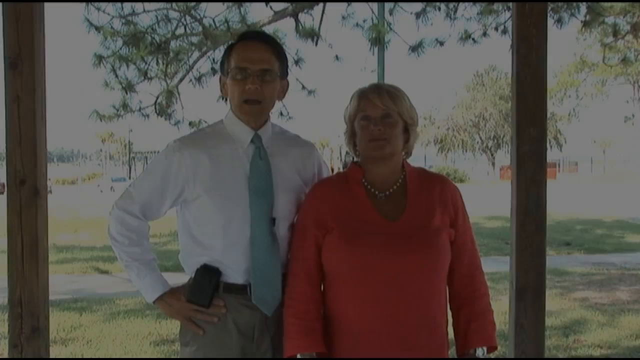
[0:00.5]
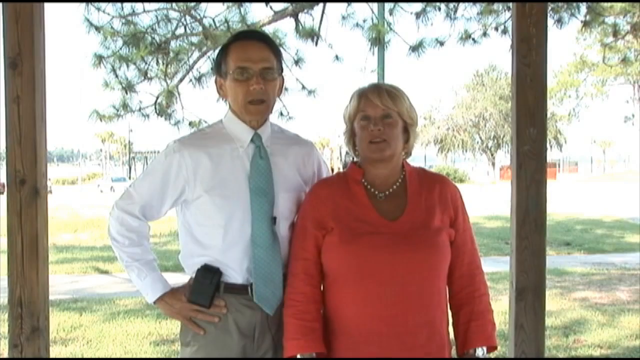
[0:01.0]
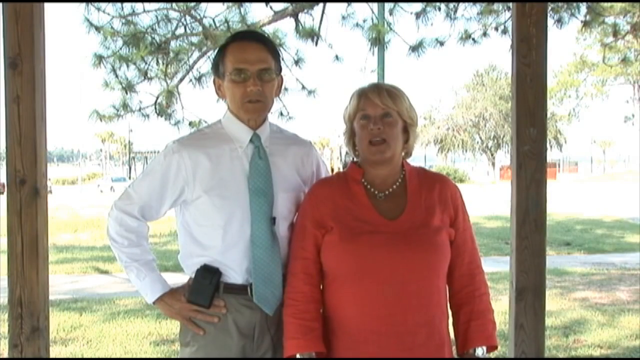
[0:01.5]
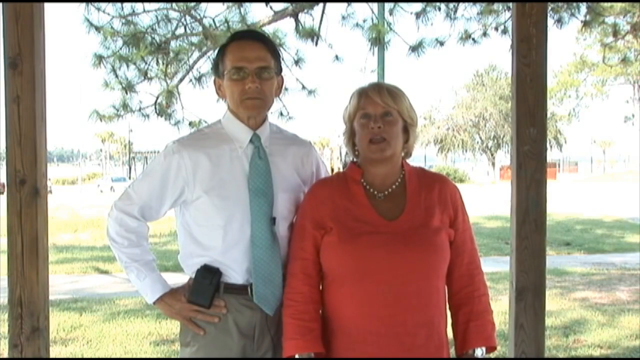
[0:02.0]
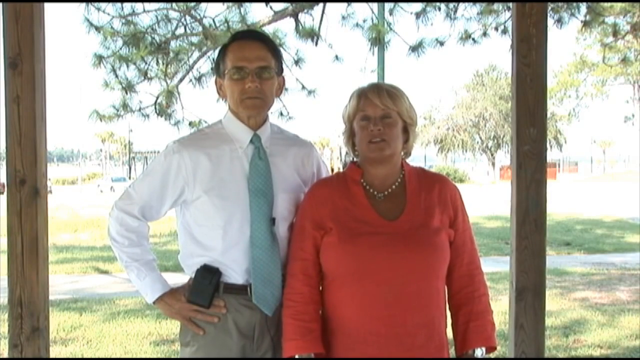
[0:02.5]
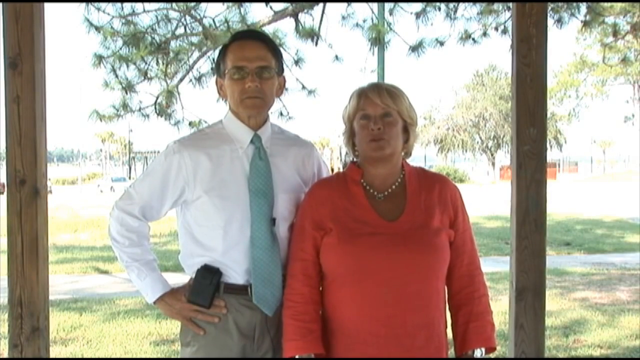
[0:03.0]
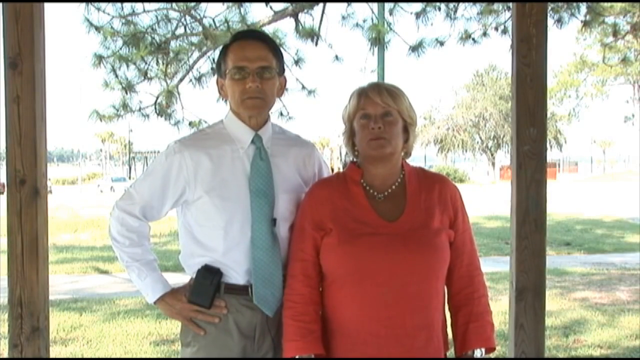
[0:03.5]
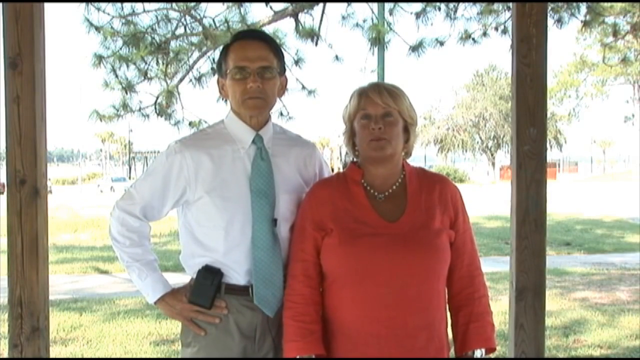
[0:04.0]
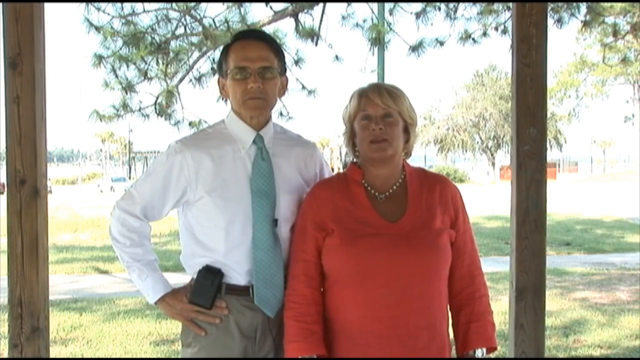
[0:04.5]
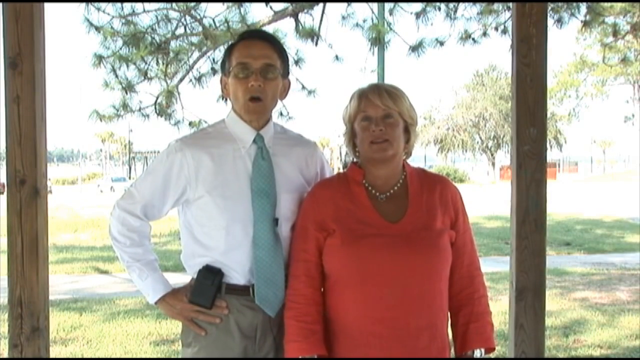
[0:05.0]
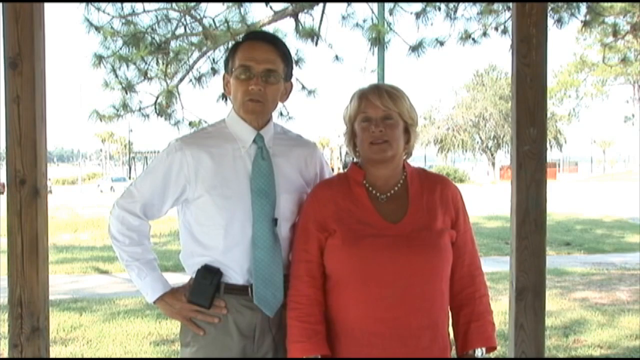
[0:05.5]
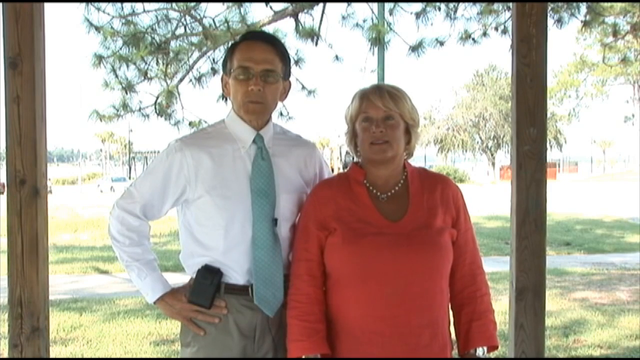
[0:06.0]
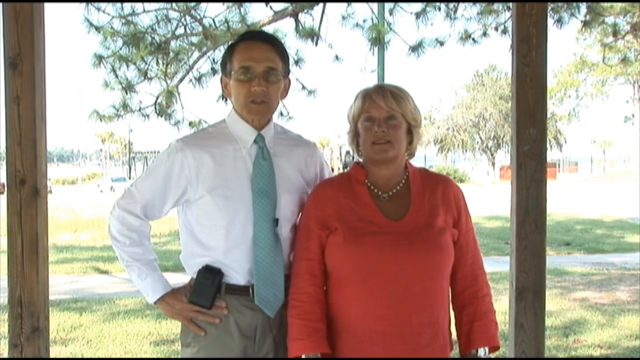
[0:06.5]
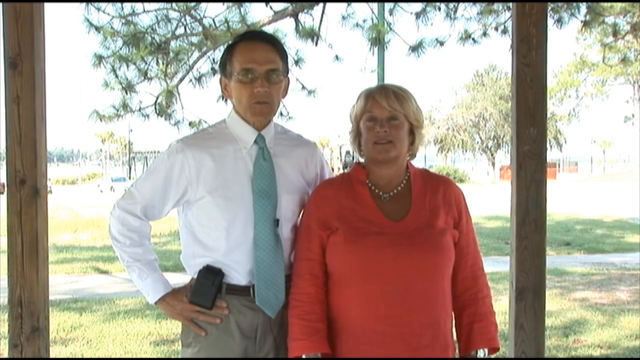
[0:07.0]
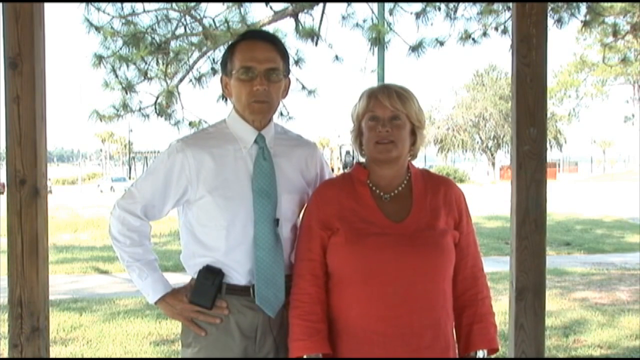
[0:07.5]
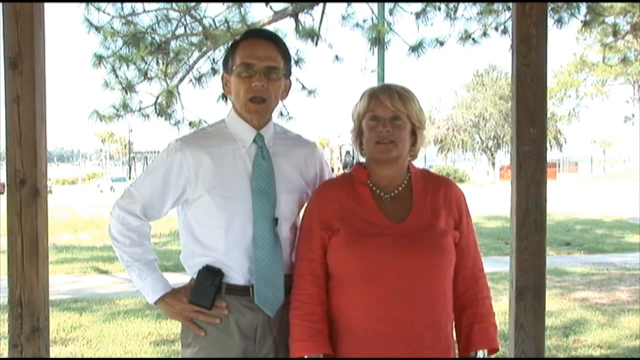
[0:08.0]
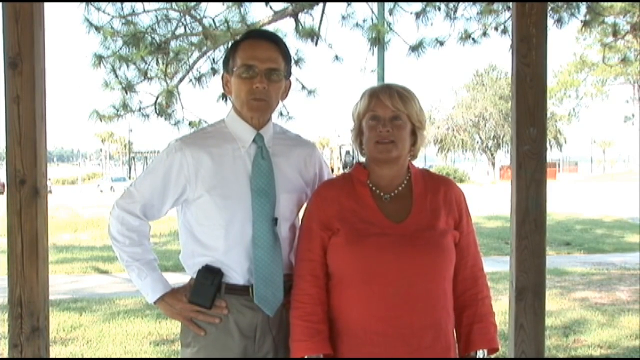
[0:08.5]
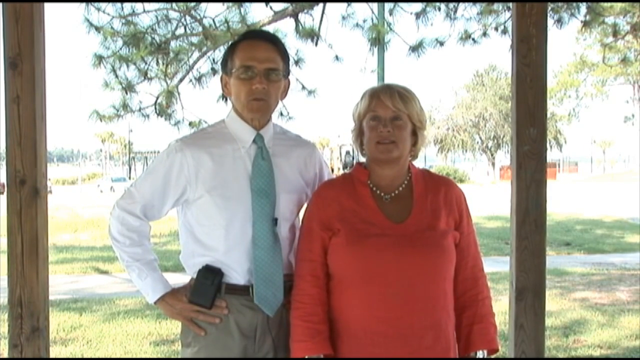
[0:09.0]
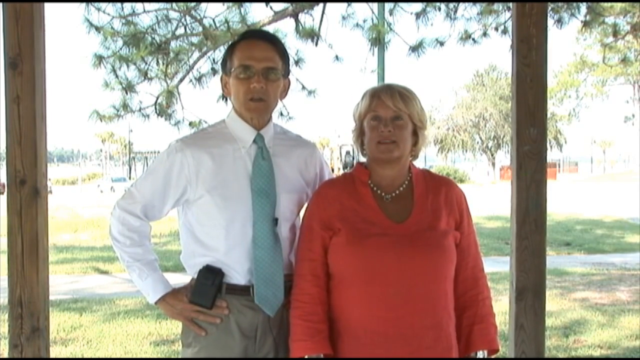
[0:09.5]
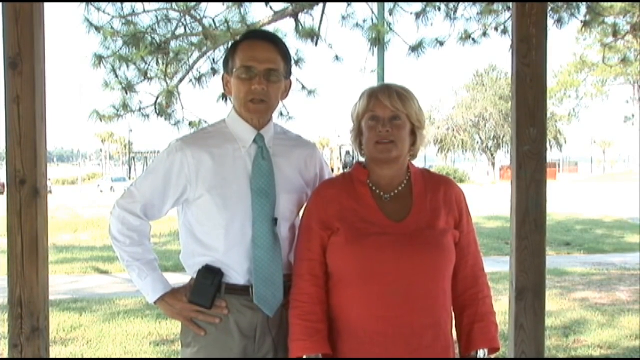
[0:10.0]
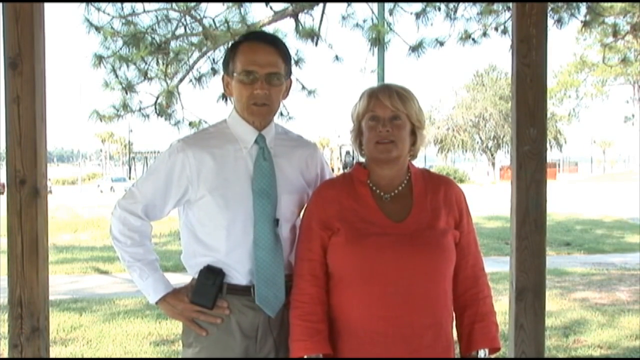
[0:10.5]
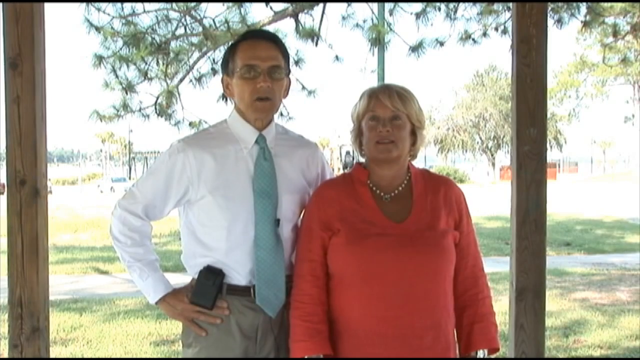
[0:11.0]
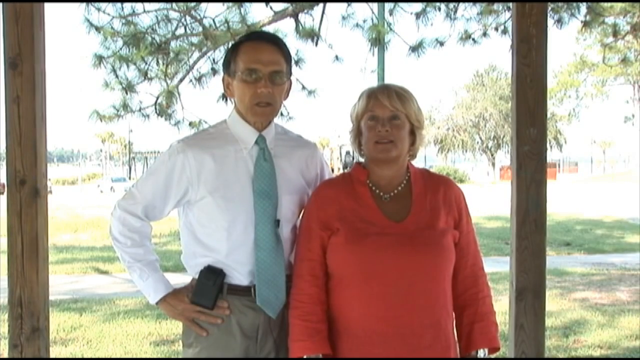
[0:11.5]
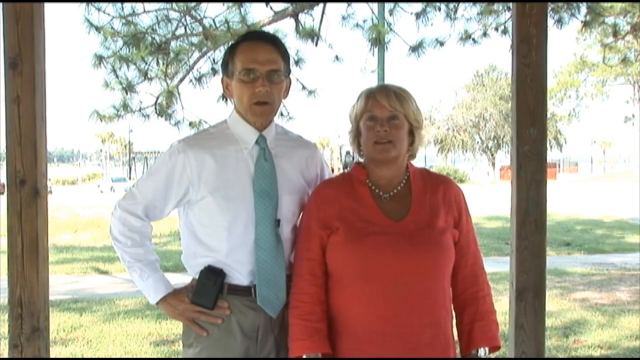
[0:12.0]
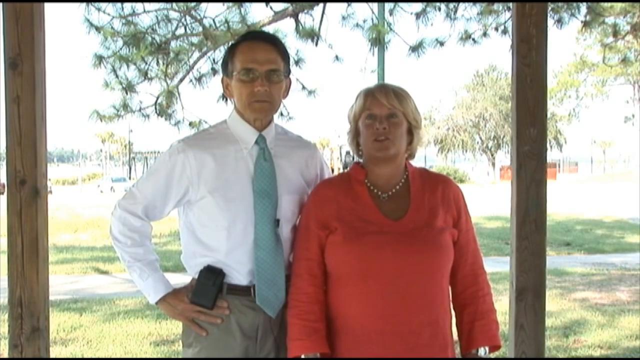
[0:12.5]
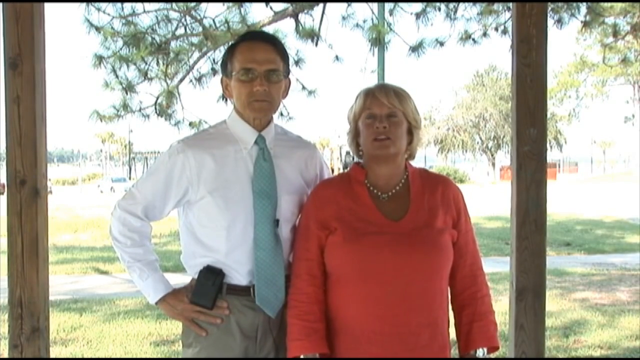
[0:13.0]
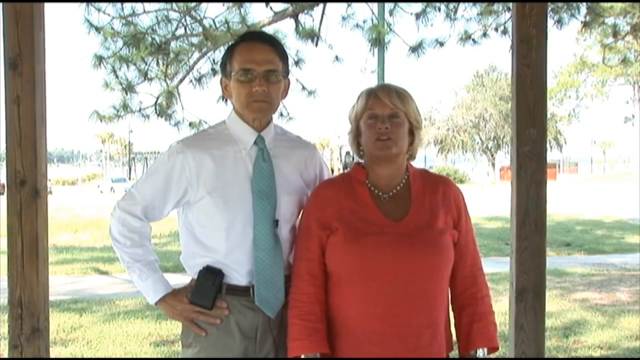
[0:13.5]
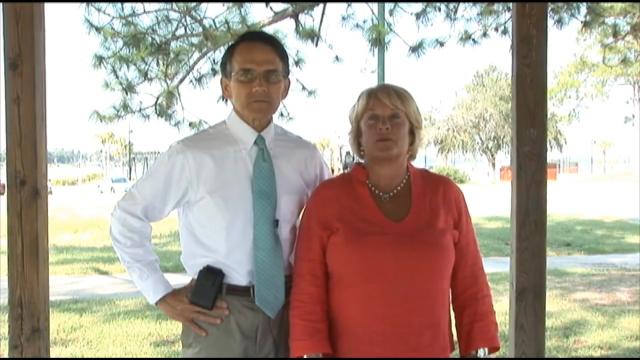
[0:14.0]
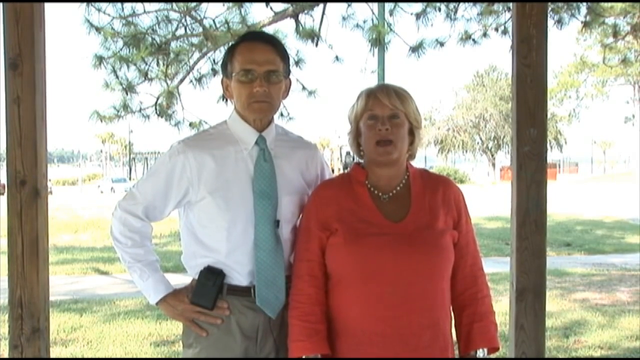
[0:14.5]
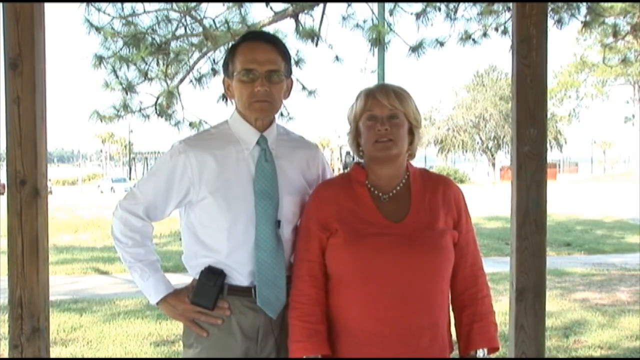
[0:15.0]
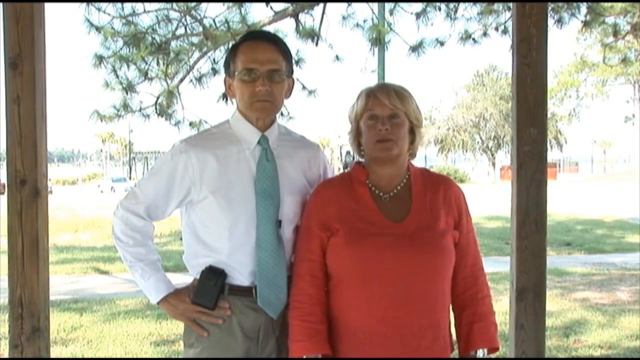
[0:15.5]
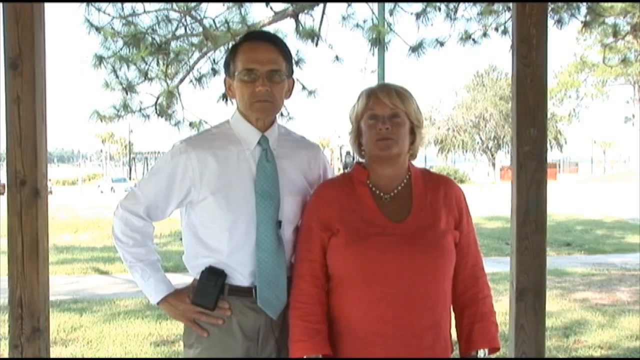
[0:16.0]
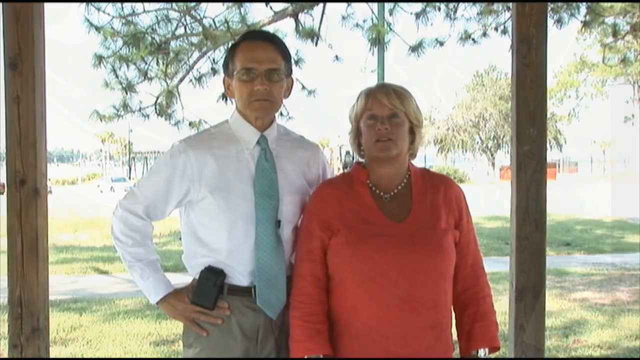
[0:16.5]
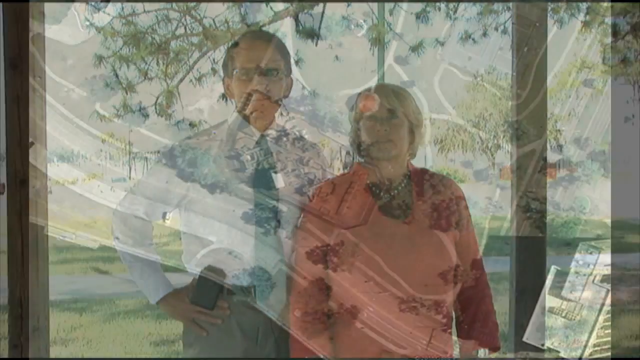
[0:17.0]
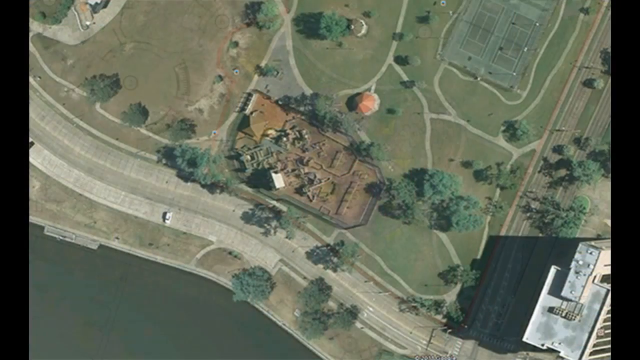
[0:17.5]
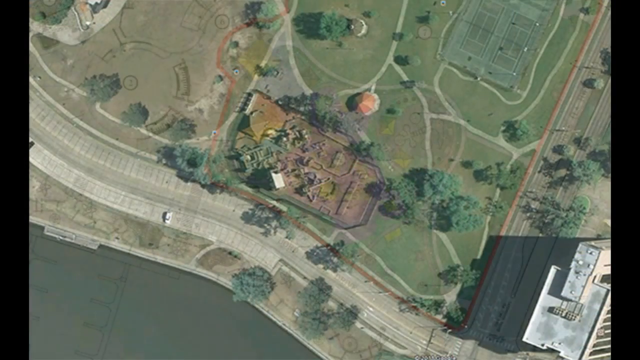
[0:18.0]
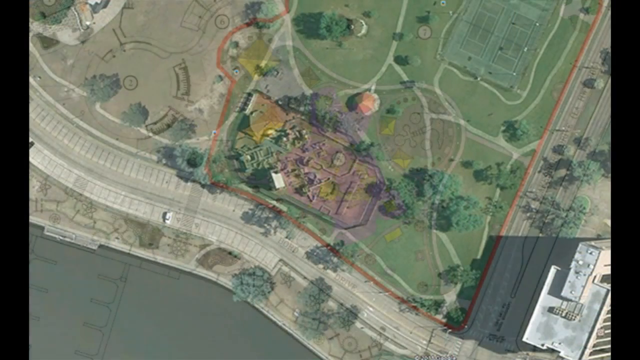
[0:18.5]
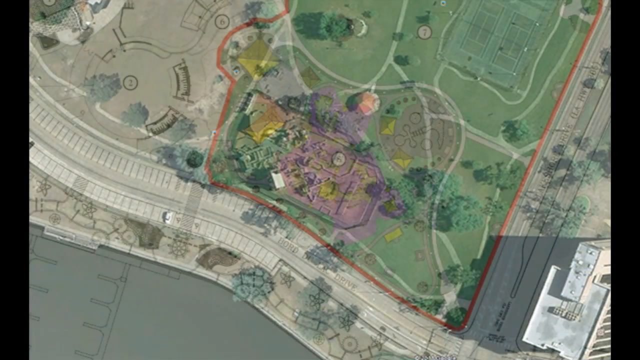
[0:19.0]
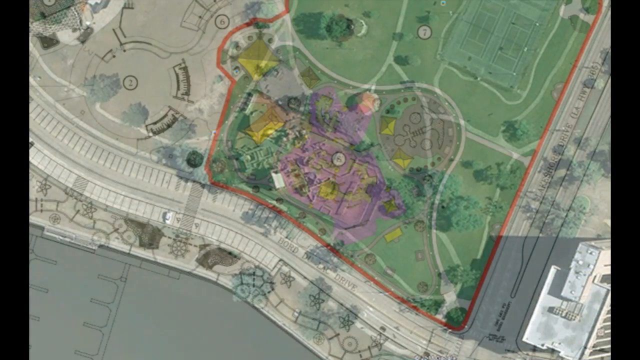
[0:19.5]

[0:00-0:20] Two people appear together: one wearing pink and white pearls and a white hat, and a man in brown pants, a black belt, a white shirt and a green tie. They stand by water, in what looks like a pond area, standing by a shade structure and talking. The video then shows the park, with a view from the top of what the park looks like: there are some shades, and roads or walkway paths run like borders through the park, shown in a picture. The picture ends and the screen goes black.